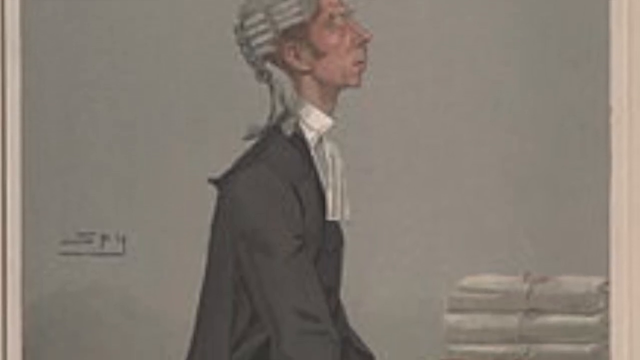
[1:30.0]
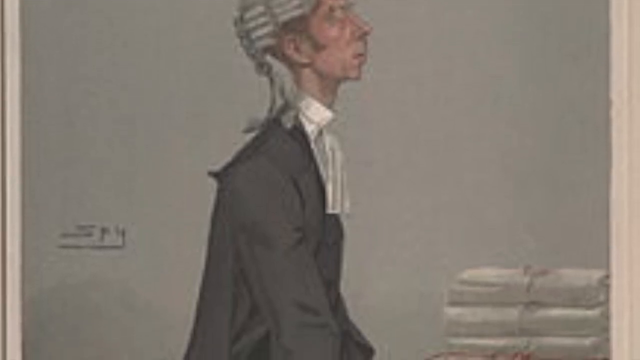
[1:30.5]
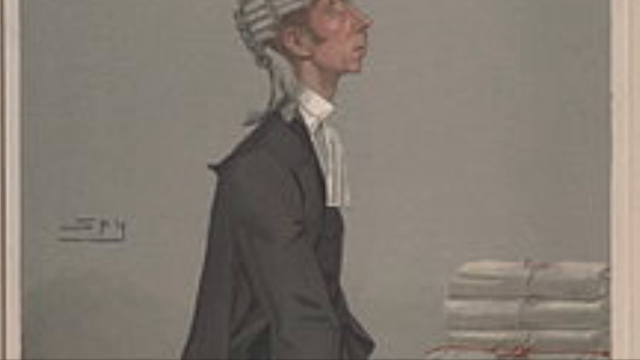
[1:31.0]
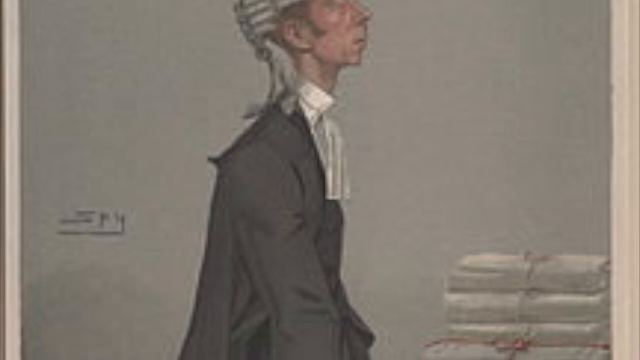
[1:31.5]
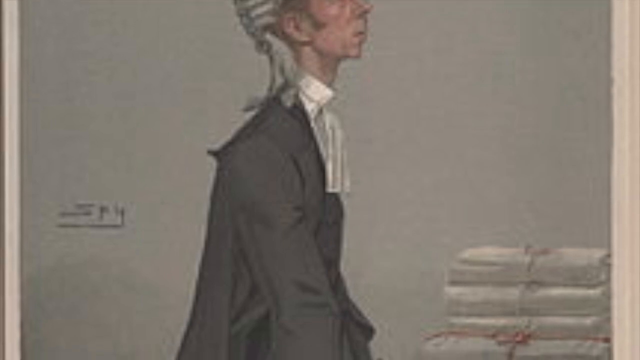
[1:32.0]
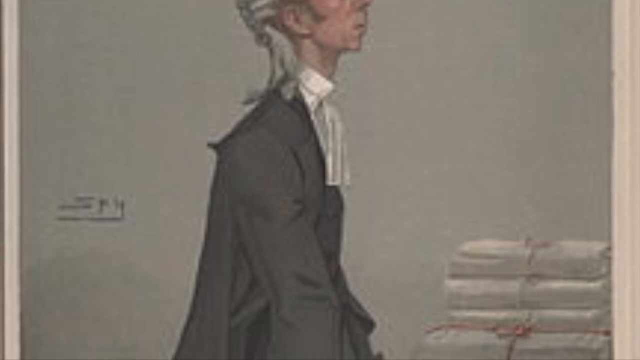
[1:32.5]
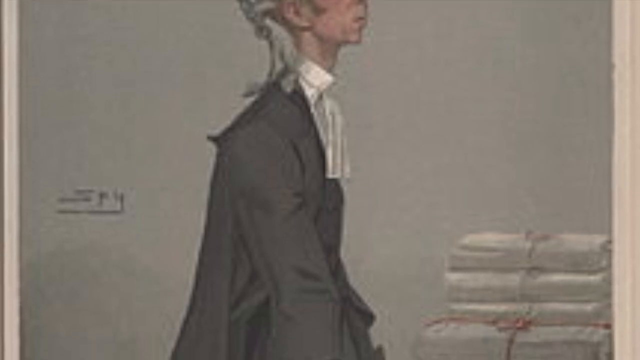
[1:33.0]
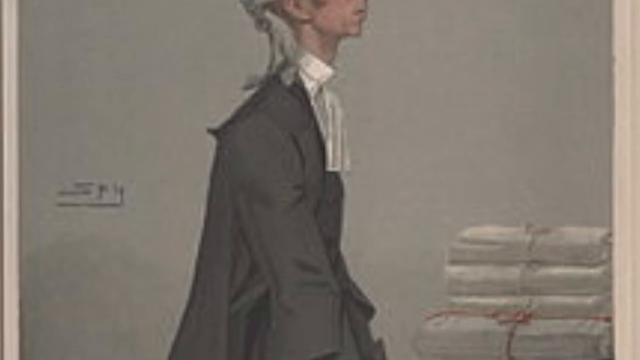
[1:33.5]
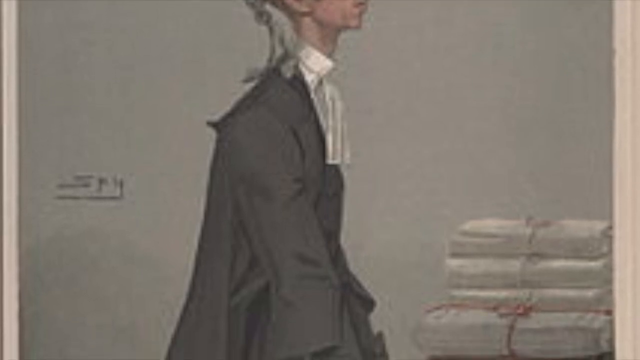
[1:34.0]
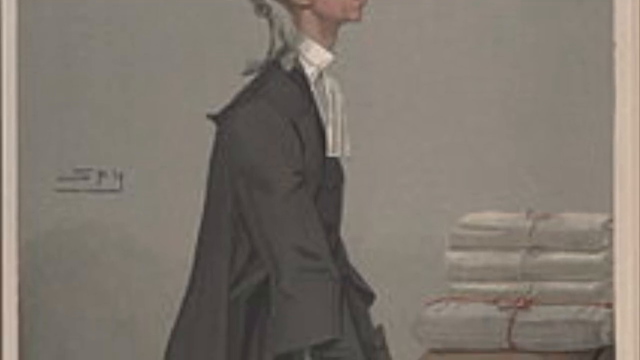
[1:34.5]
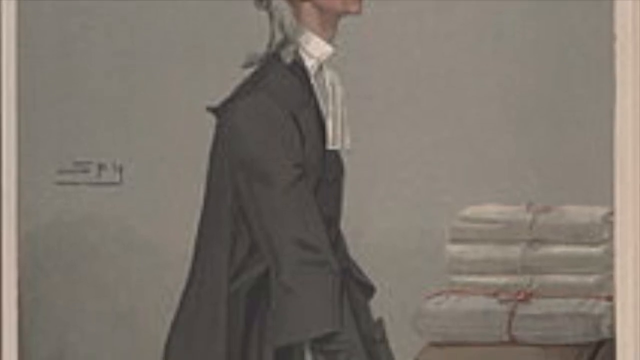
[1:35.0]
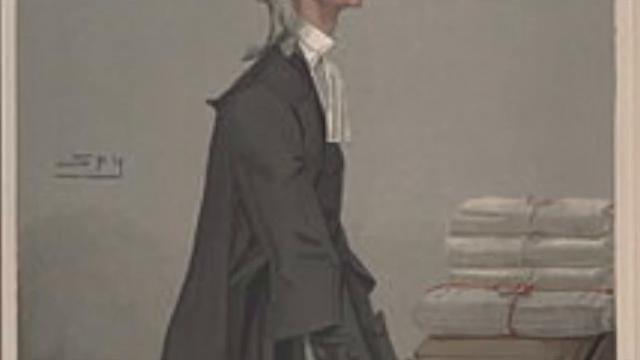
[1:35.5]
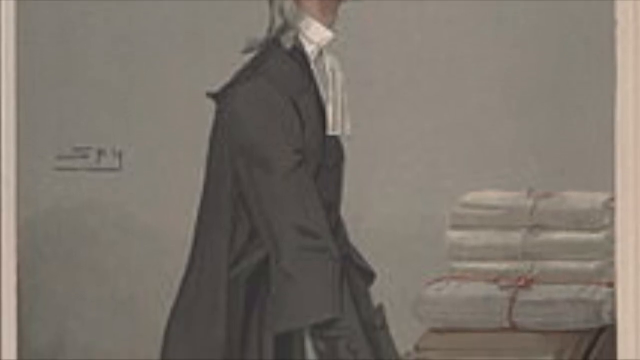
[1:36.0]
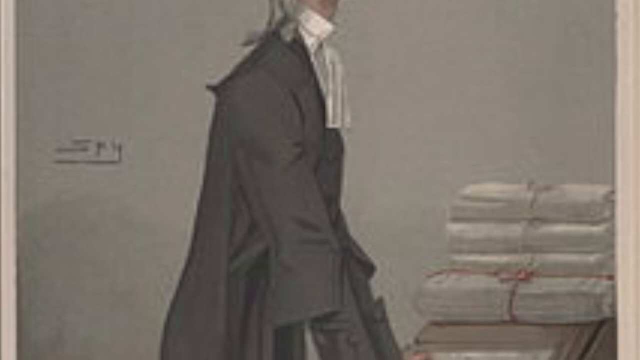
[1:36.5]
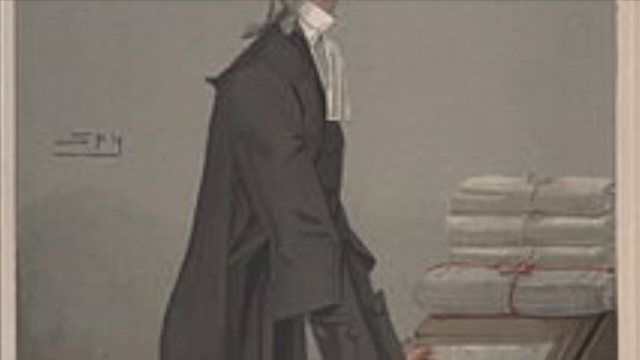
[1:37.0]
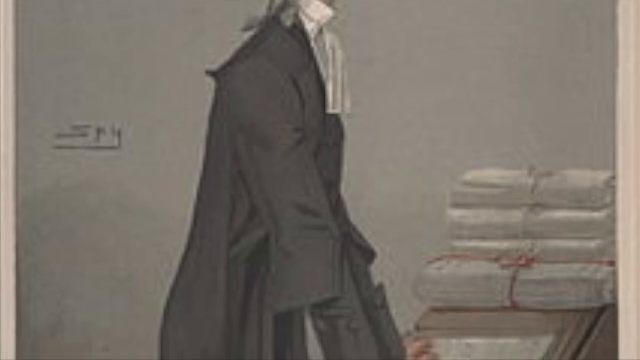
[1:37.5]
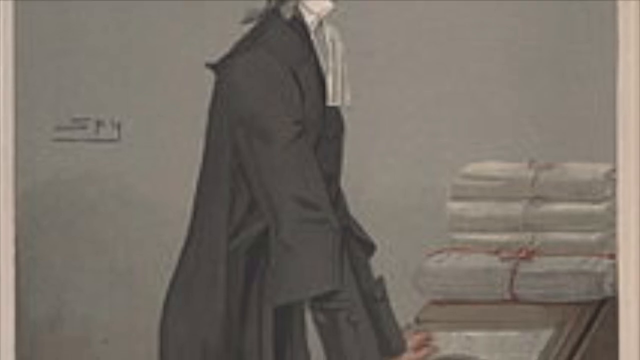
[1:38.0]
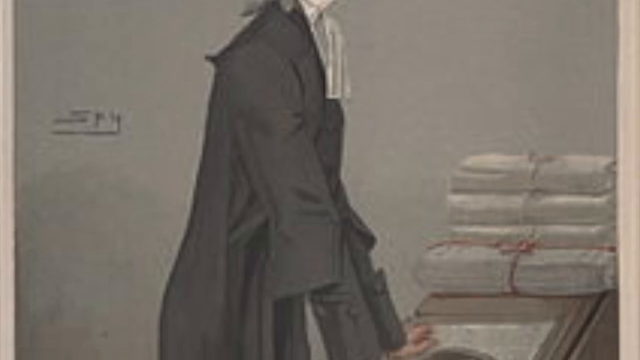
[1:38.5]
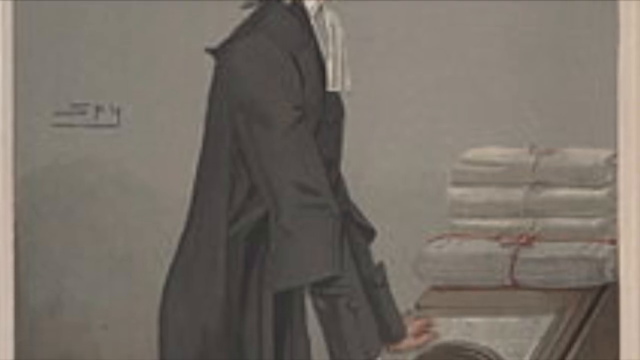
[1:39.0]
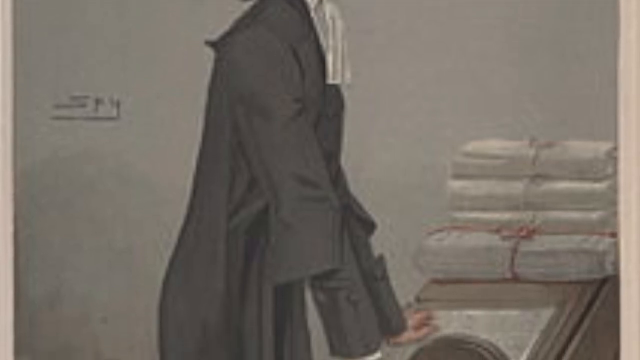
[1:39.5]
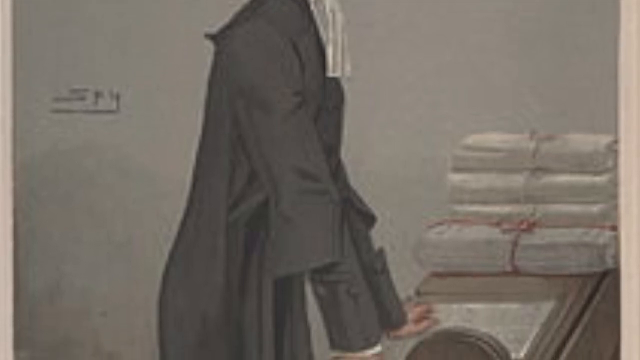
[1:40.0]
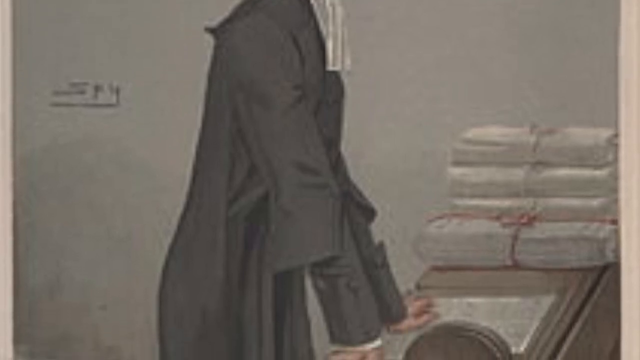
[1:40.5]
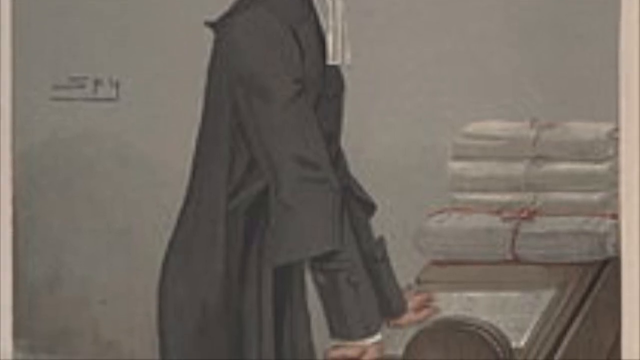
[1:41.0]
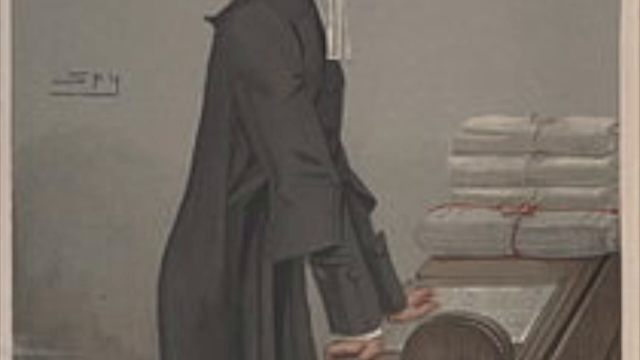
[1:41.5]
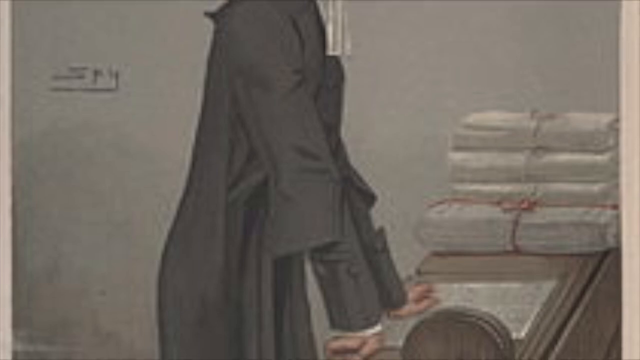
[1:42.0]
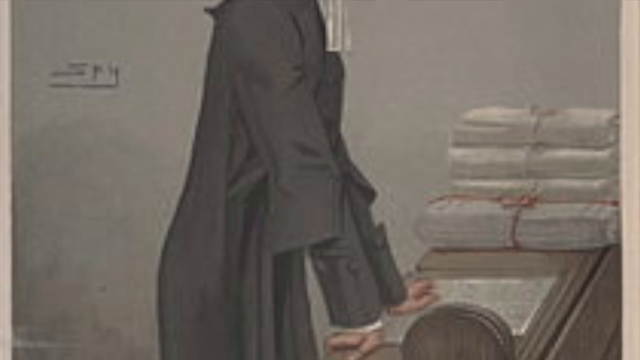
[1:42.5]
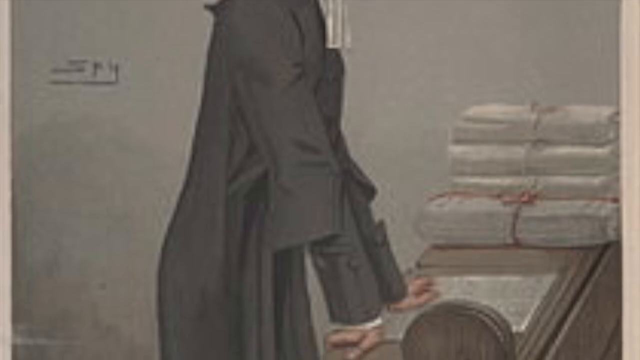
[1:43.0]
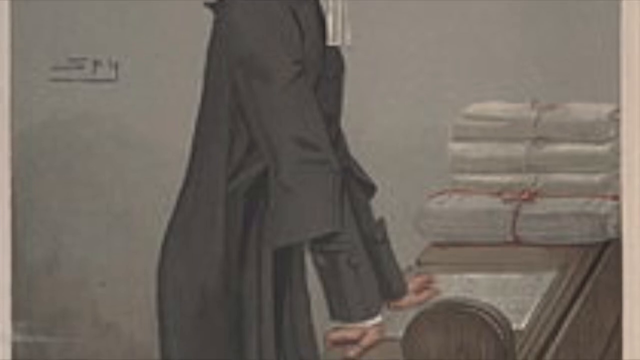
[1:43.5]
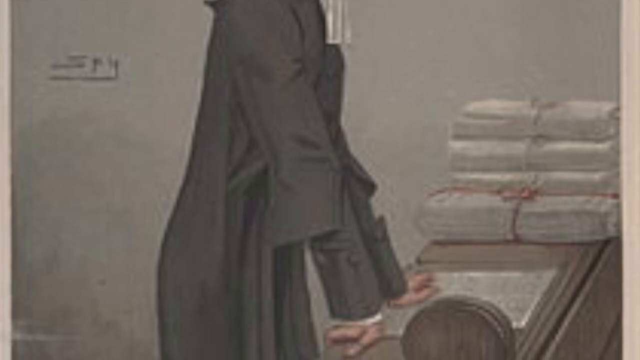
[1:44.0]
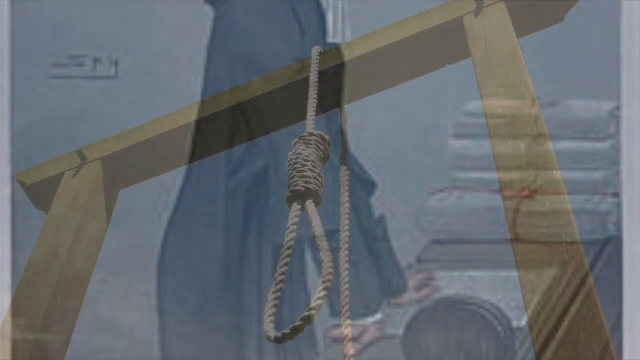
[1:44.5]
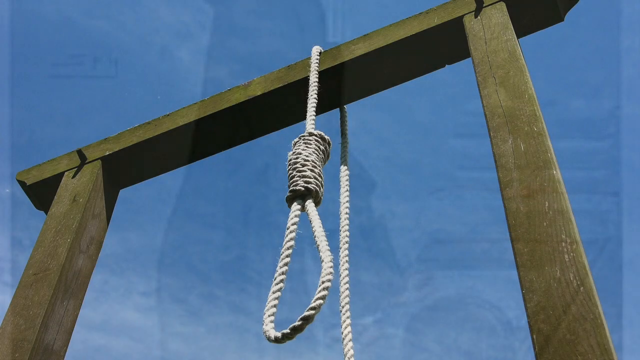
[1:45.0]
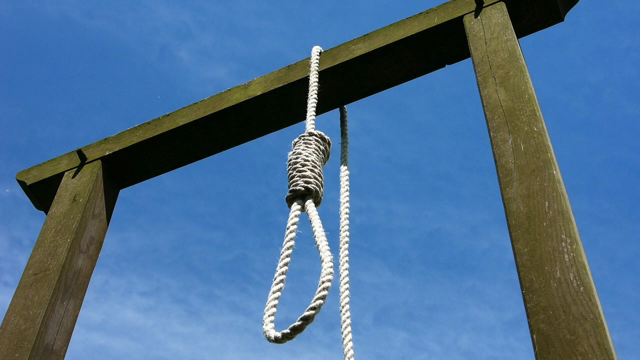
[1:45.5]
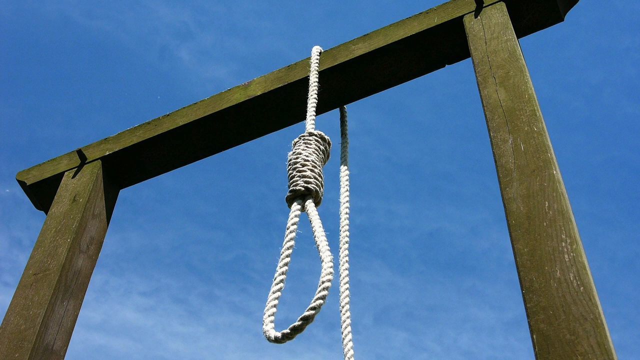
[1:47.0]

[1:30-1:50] The camera continues panning down the painting of the man, revealing a desk that the man stands in front of. Over to the man's left is a bunch of white packages tied together with purple or pink string. The man has his hands on the desk and leans forward very slightly. After the camera pans down a bit more, a fade leads to a new scene of what appears to be a gallows platform. A U-shaped arch is overhead with a rope hanging over it; the rope has a noose with multiple braids above it, hanging down loose. A blue, very lightly cloudy sky is in the background. The camera lingers on this scene.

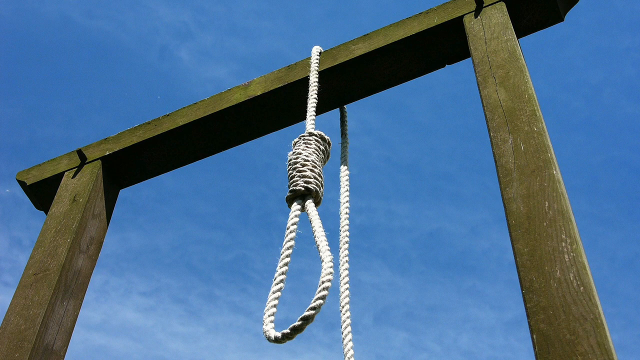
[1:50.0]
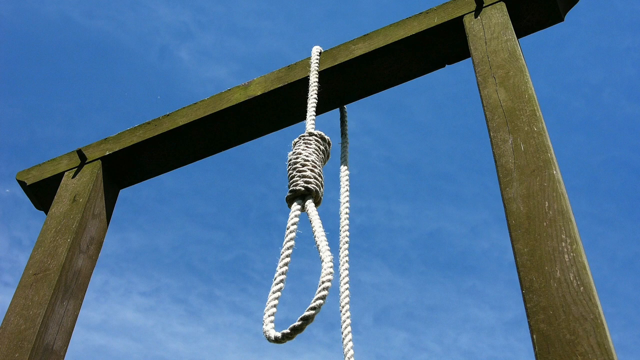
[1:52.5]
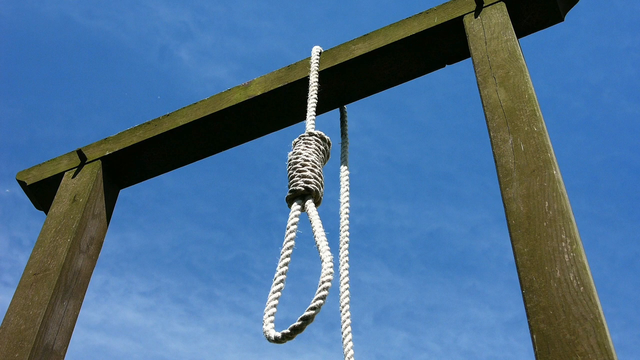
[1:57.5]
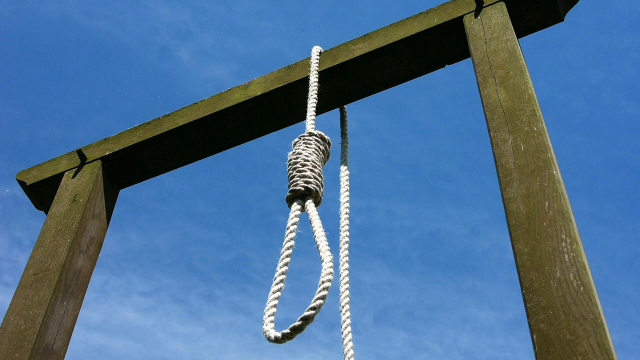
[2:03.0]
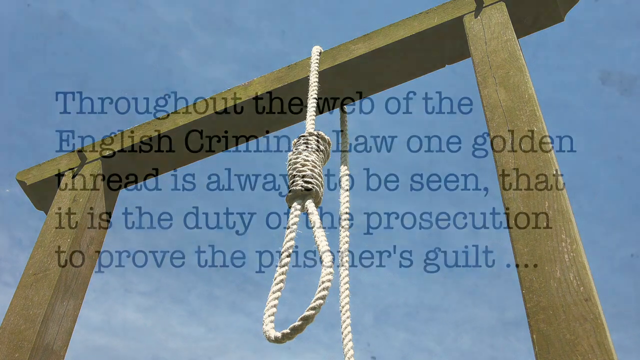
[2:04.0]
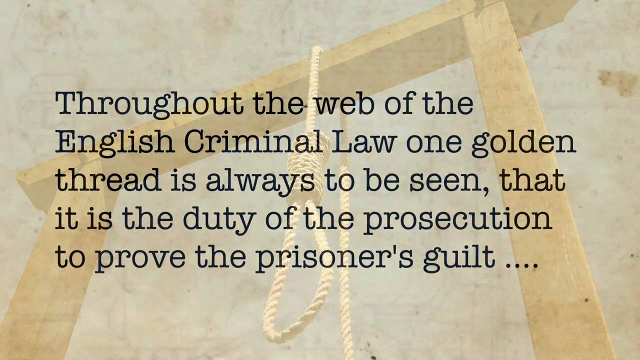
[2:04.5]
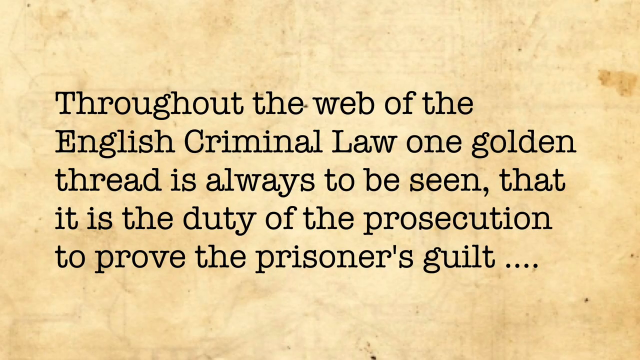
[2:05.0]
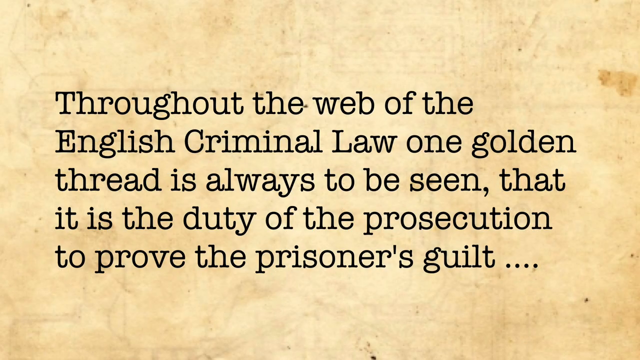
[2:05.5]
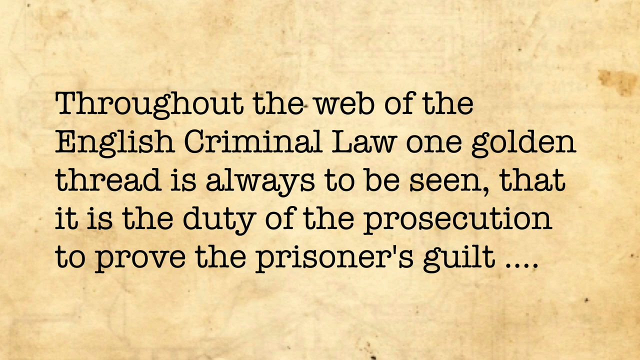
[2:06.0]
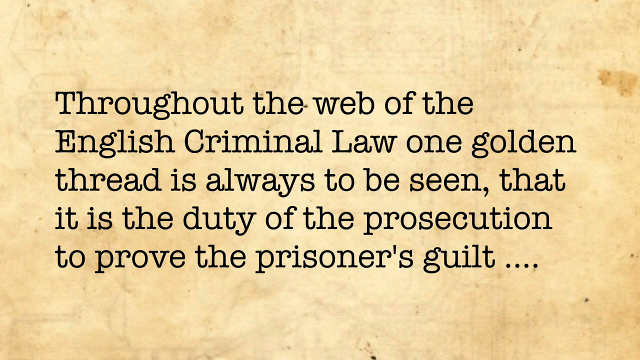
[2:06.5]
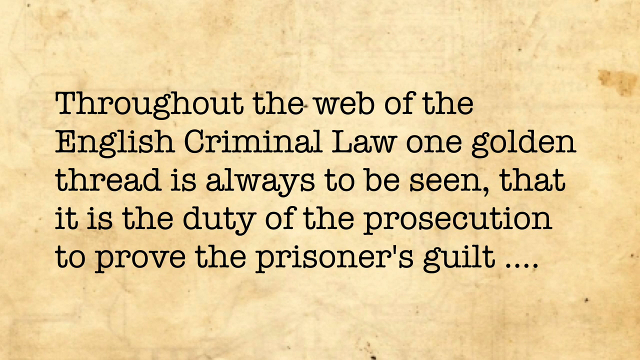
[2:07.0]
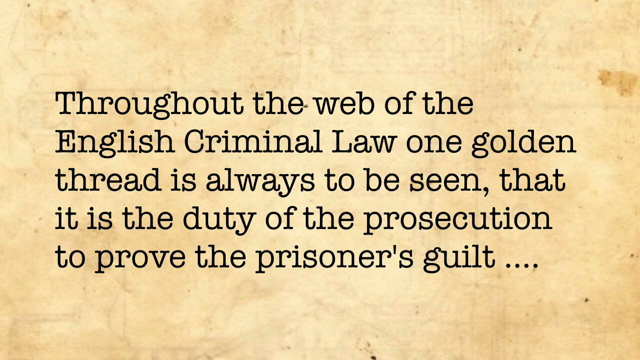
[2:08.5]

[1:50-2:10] The gallows platform remains on screen for a moment with no other animation, the noose centered in the frame. A fade then leads to black text on a weathered, yellowy piece of parchment reading: "throughout the web of the English criminal law, one golden thread is always to be seen. That it is the duty of the prosecution to prove the prisoner's guilt", followed by four ellipsis marks. The page looks very weathered, with black markings on it, a splotch of darkness on the right side and multiple tiny dots. The text is in a fancy serif font, runs five lines, and is very large, covering most of the screen. It stays on screen.